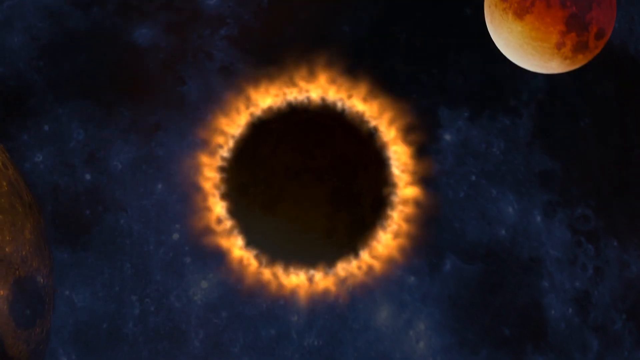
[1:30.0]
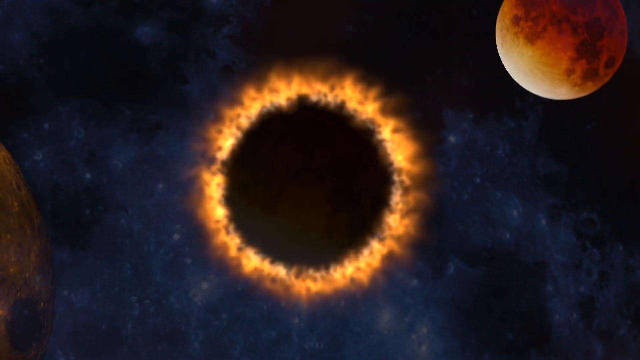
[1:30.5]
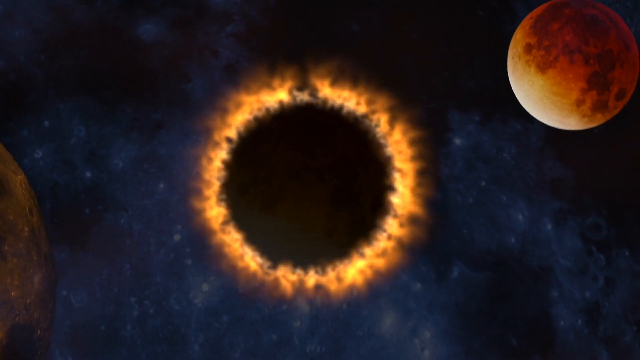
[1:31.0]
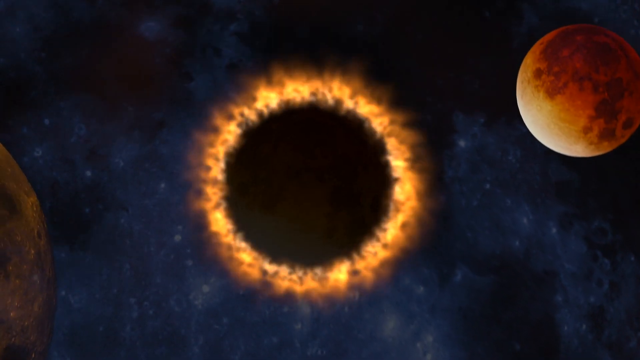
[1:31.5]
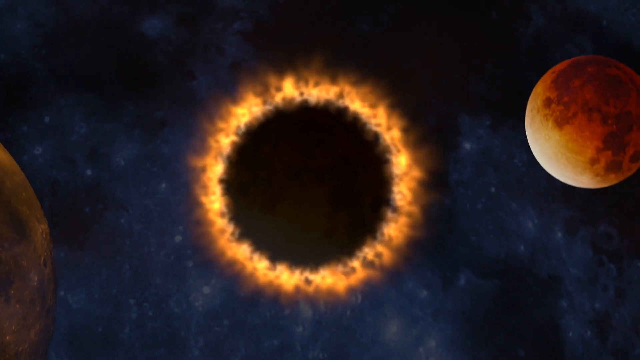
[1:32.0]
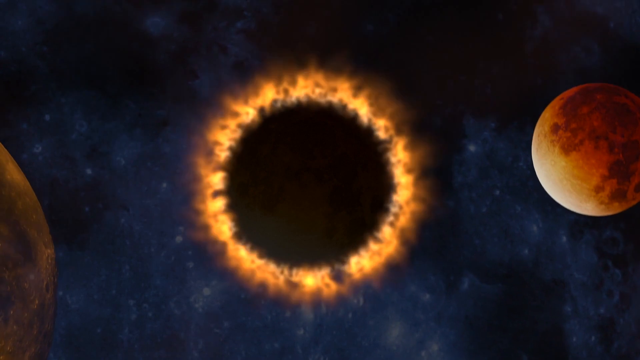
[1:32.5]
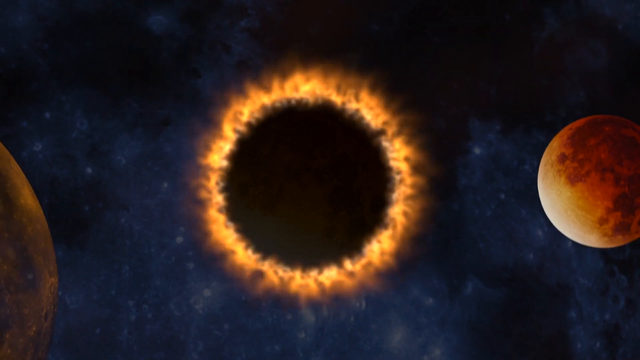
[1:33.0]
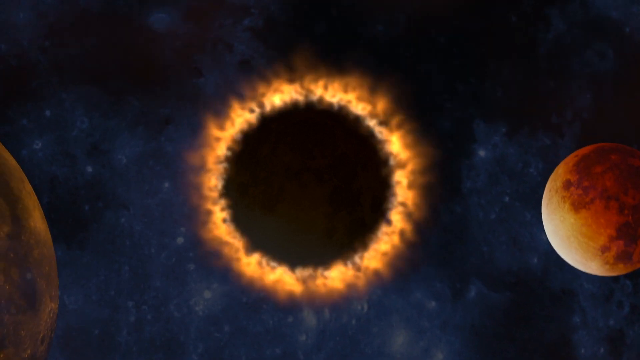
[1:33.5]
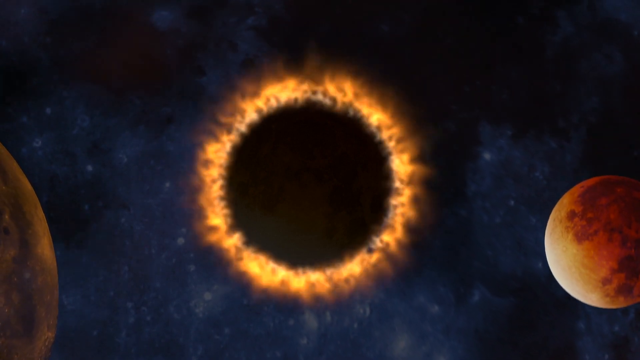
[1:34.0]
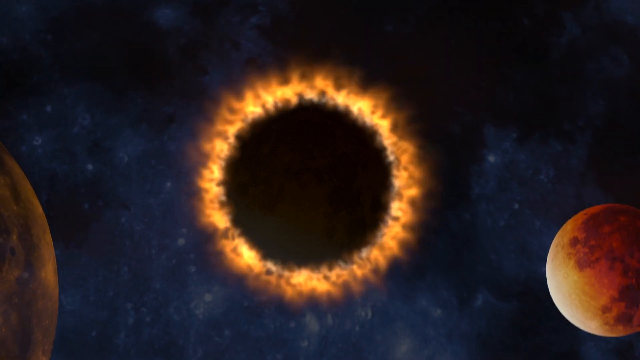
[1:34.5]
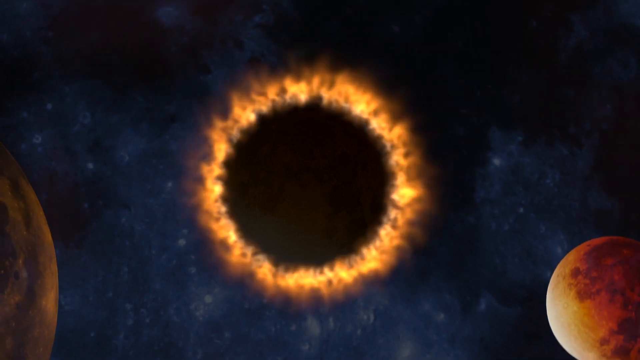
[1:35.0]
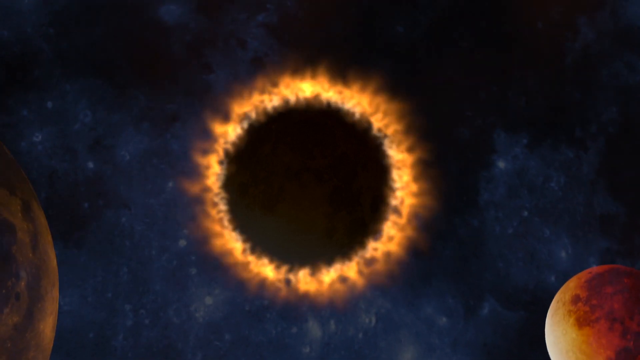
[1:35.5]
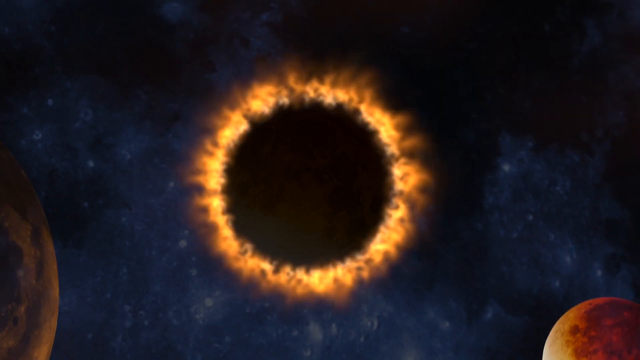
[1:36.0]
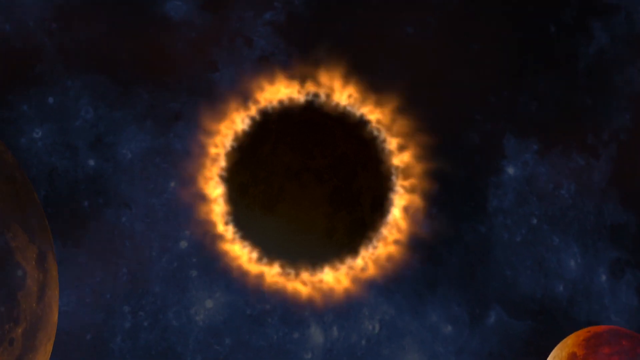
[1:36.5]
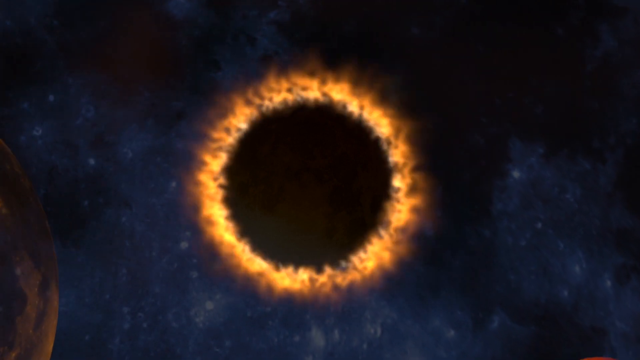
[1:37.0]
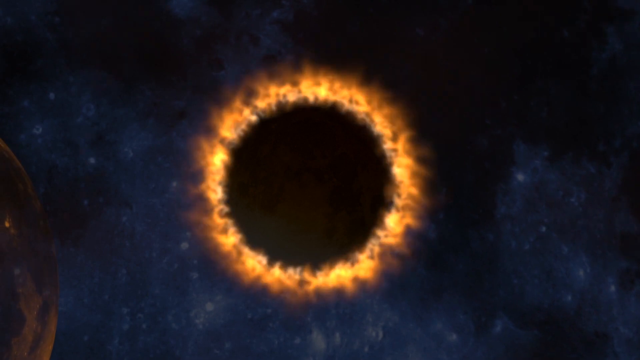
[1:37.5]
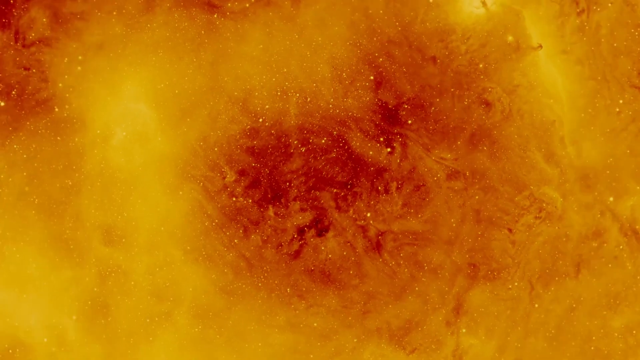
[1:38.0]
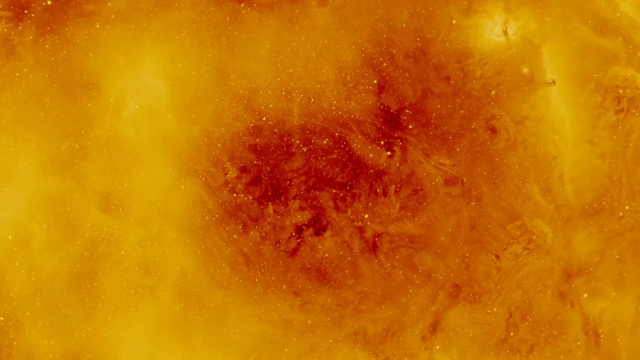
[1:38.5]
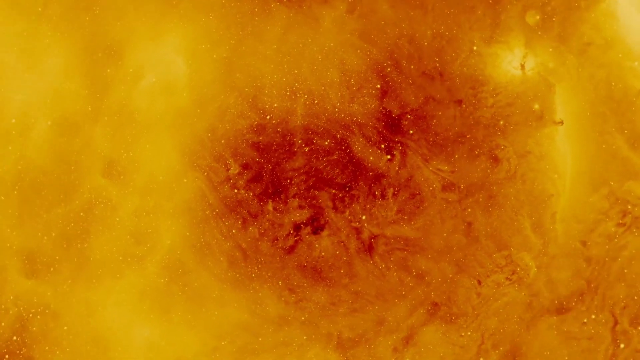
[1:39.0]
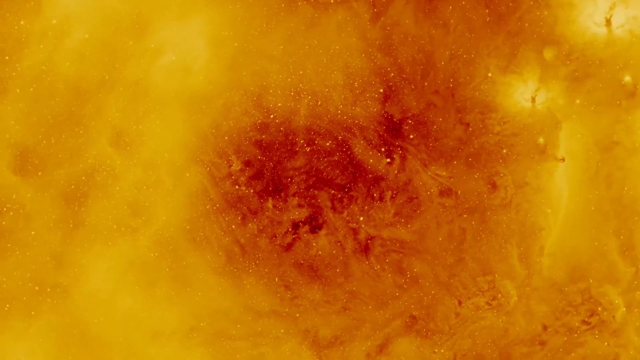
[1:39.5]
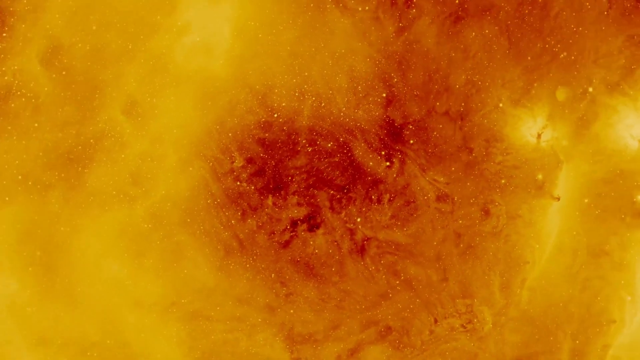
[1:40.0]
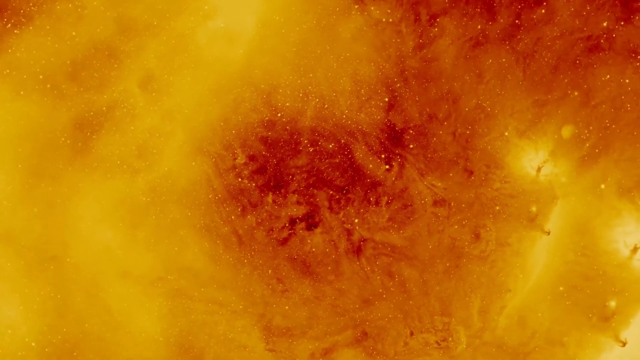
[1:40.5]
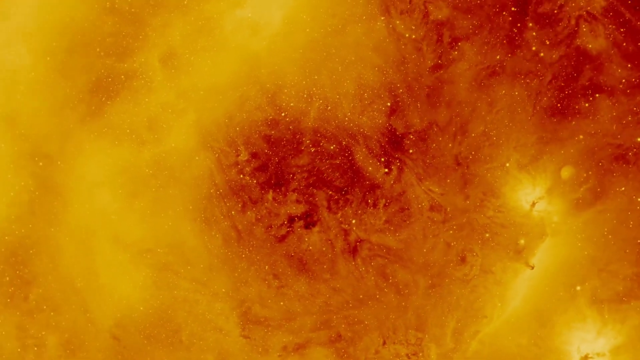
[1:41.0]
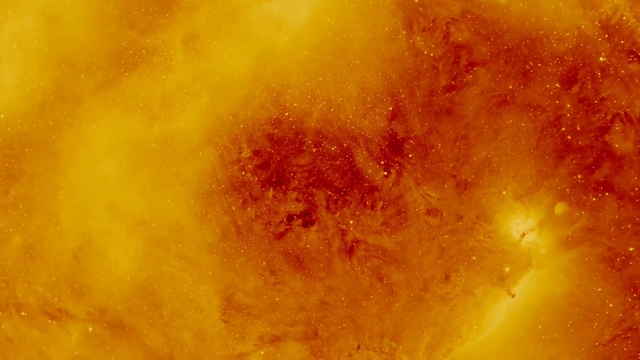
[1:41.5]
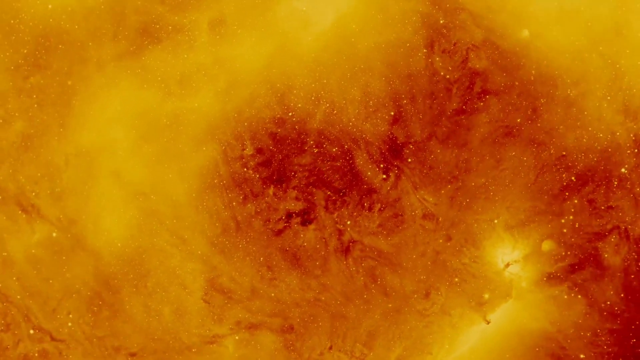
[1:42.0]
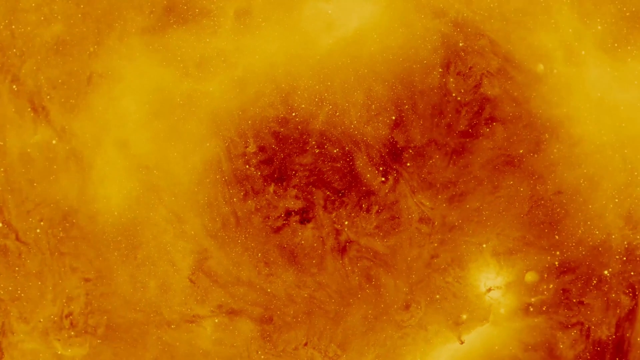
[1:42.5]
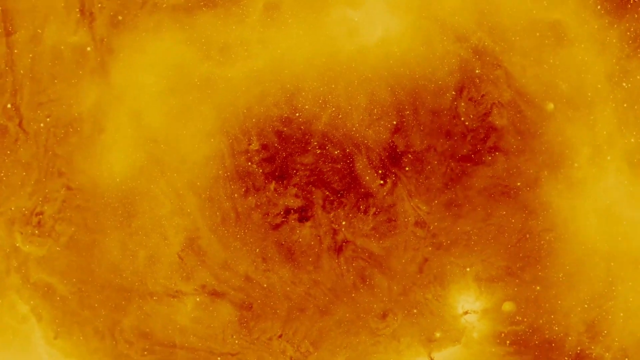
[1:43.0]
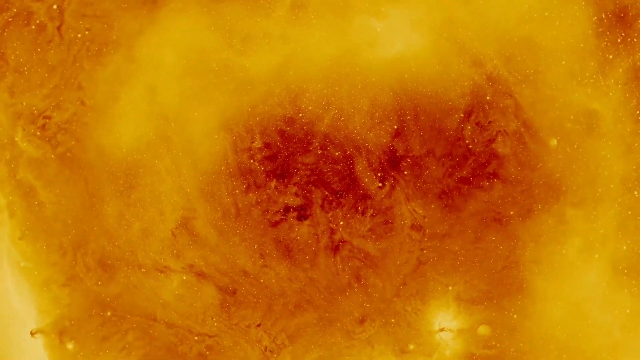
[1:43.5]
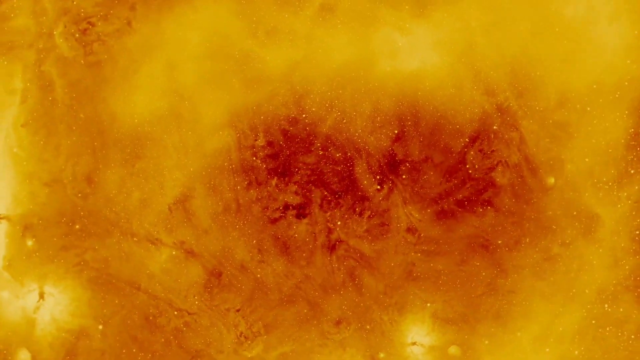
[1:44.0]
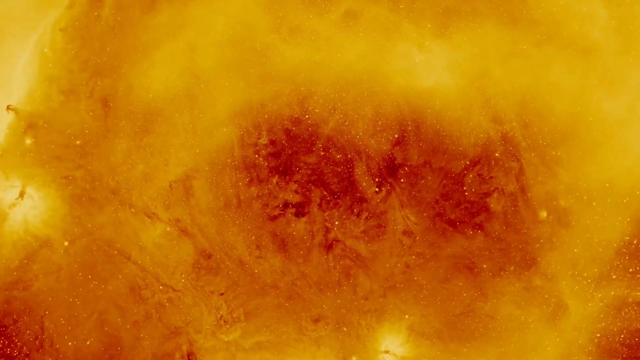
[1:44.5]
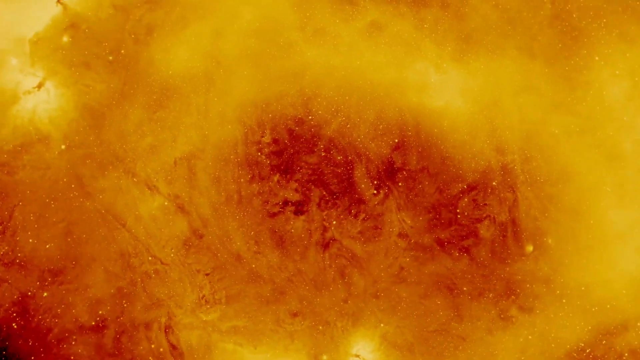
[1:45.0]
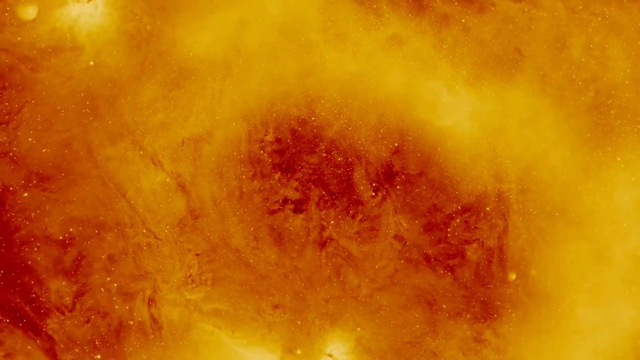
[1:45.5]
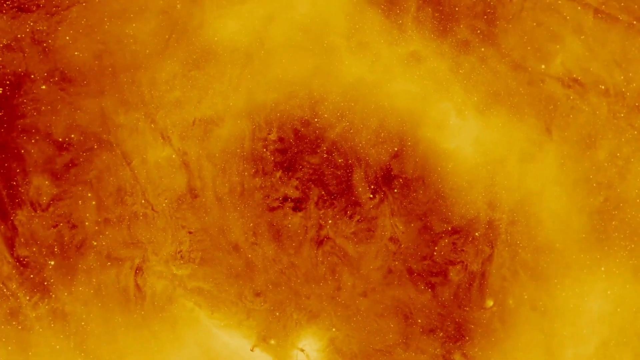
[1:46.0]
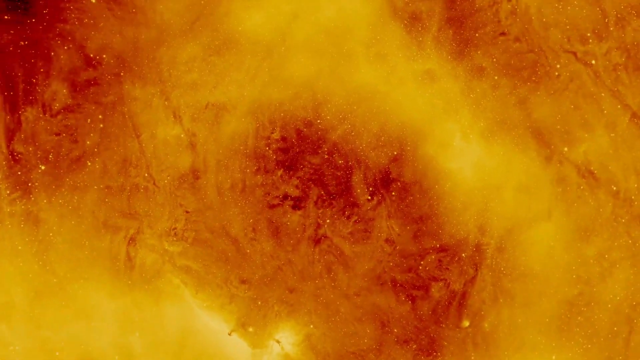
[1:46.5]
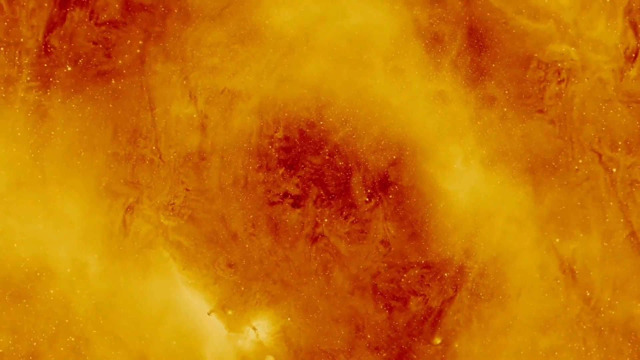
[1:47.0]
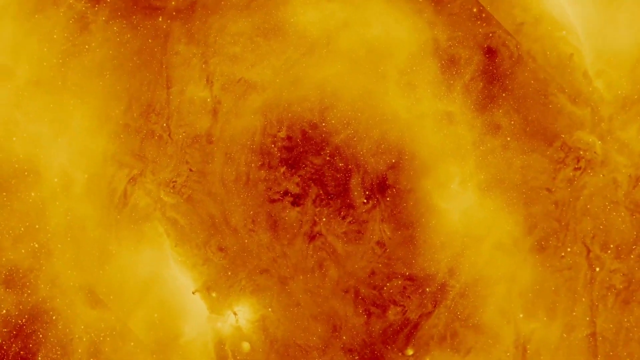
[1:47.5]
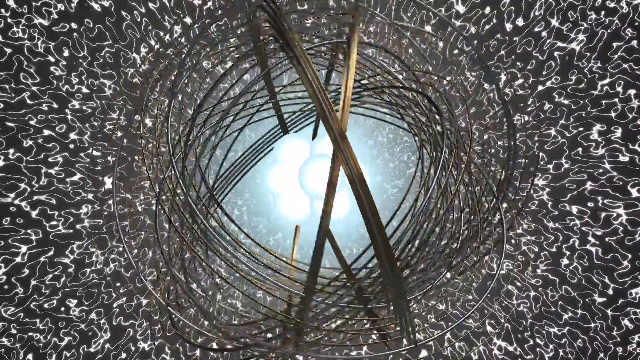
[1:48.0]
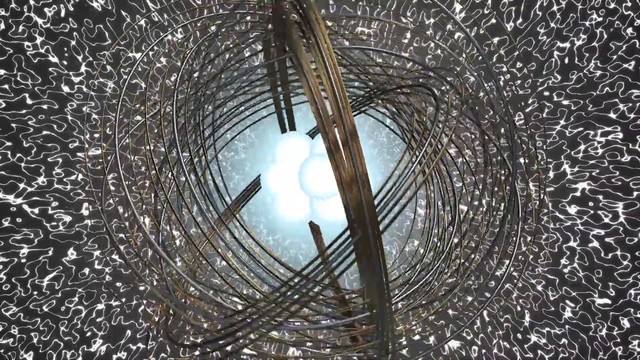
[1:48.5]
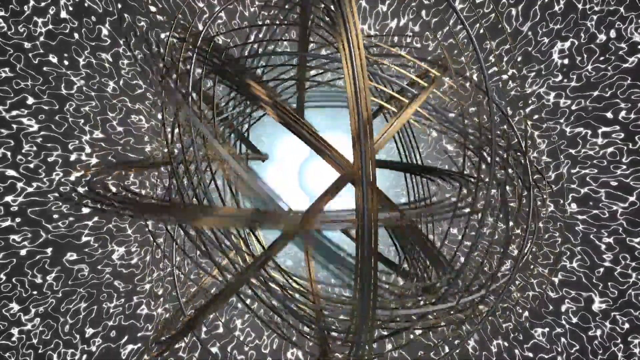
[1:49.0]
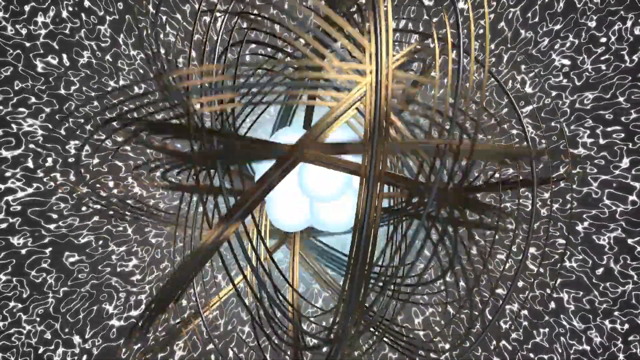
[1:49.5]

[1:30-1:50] The space view returns, with a very dark blue-black background and a few twinkling stars in the bottom left. A quarter of the brown planet is barely visible, spinning clockwise. In the center is the black circle with red and orange flames pulsating off it. In the upper right corner is about half of the yellow planet with orange patches on its surface, coming down from the top and moving down and ever so slightly to the right. As it goes down and off the bottom of the screen, the other planet continues to turn, and the sun looks like it is spinning a little with its flames pulsating. Then comes a close-up, almost zoomed-in view of the sun: red in the center with a little red up to the right of it, and yellow and orange around it. The yellow and orange spins in a clockwise motion as the view zooms out, and it appears to get deeper, with the center portion further into the image. It cuts back to the bluish-white molecule-like shapes with the coils spinning around them; there are probably 30 coils, spread out a little, some going left and some right. The outer edges are mostly black with small white markings all over, as the image pulses outward and the blue moves closer to the camera.